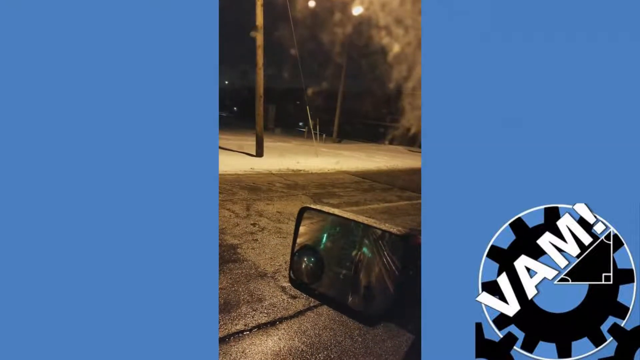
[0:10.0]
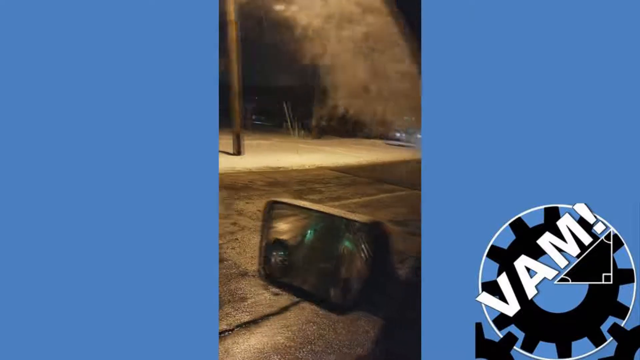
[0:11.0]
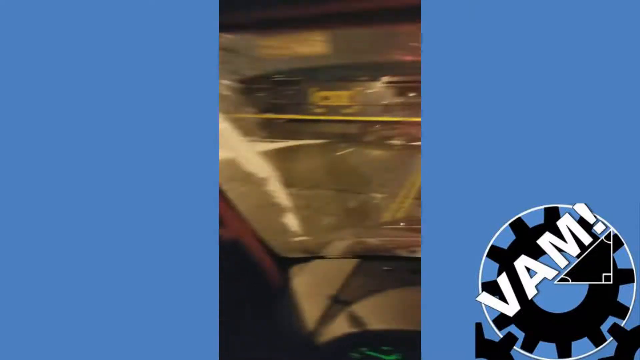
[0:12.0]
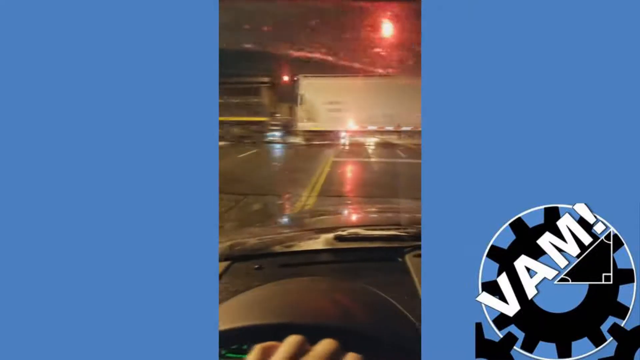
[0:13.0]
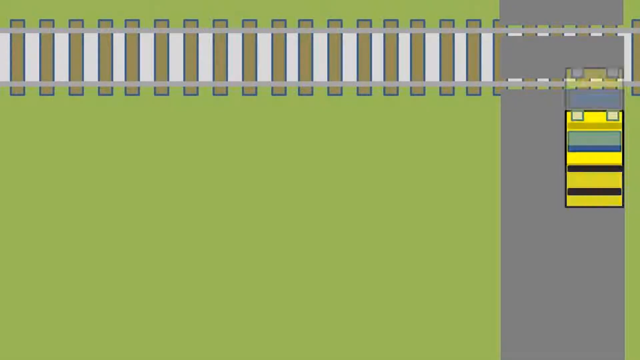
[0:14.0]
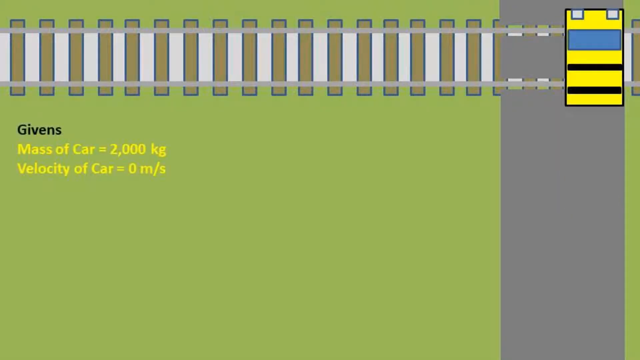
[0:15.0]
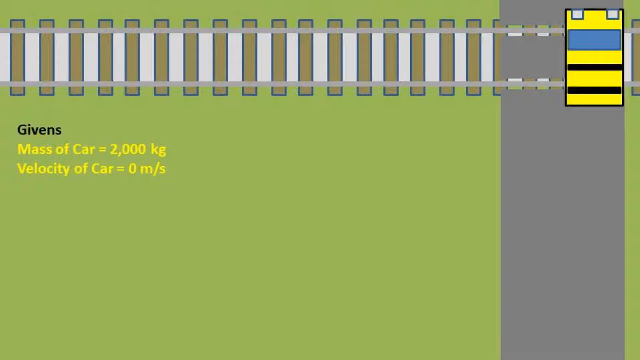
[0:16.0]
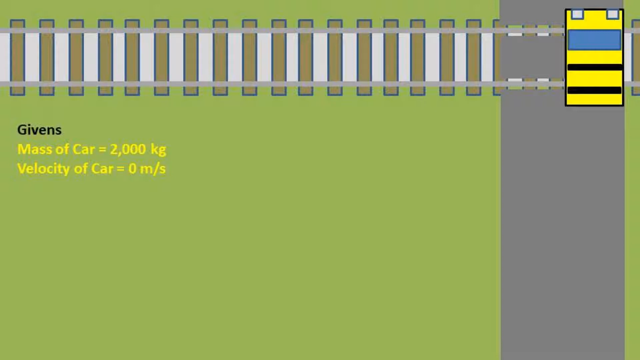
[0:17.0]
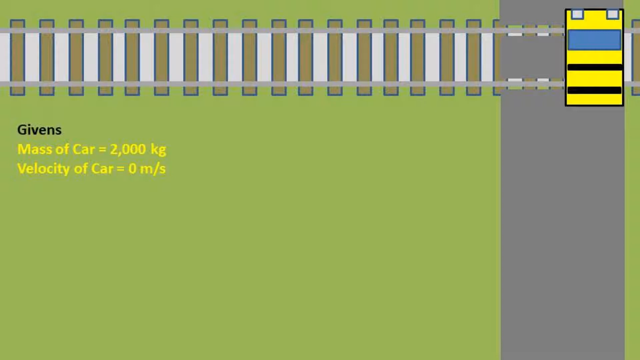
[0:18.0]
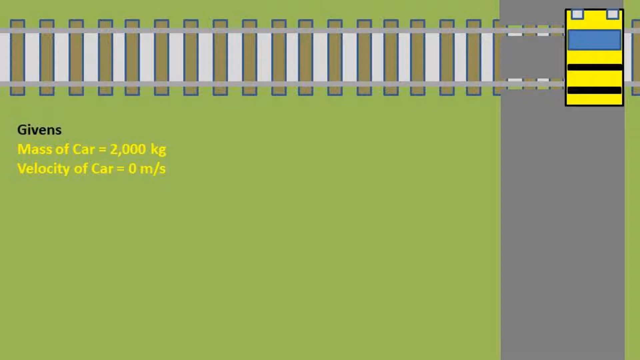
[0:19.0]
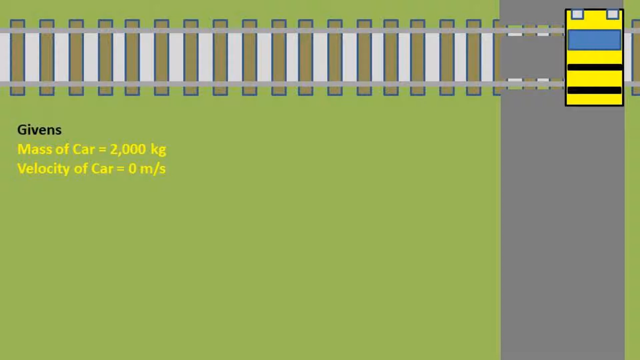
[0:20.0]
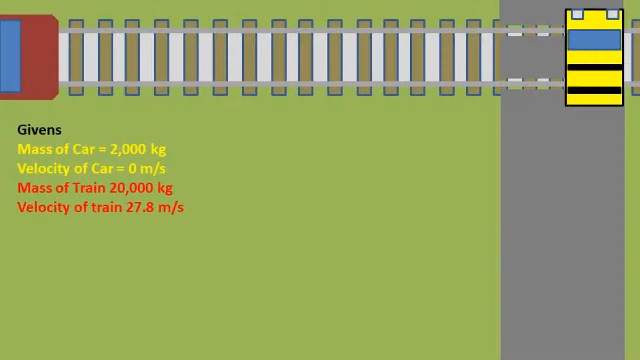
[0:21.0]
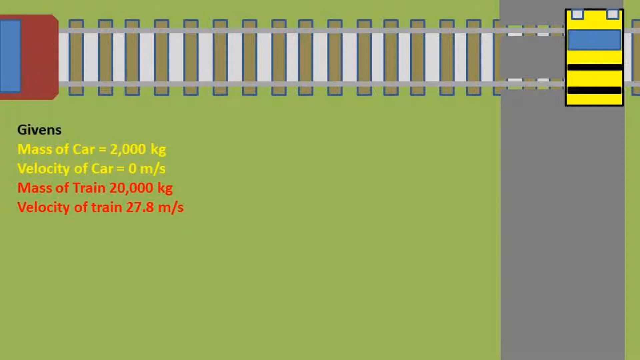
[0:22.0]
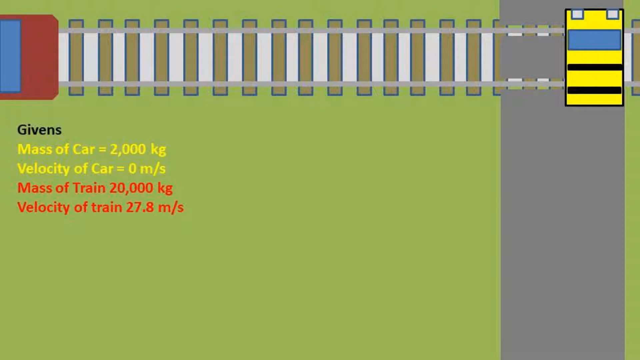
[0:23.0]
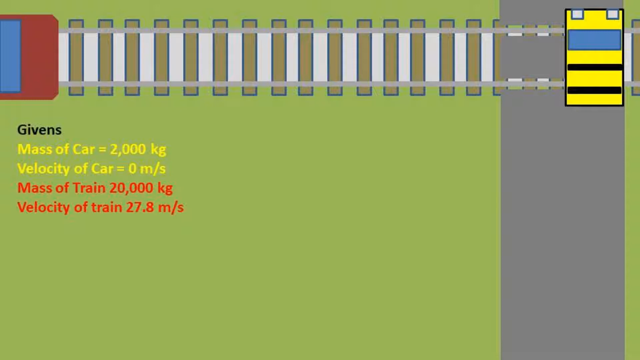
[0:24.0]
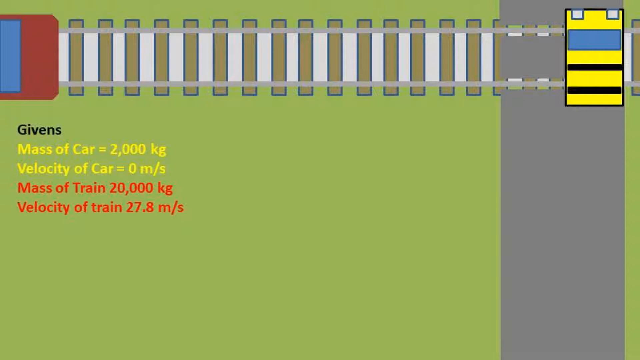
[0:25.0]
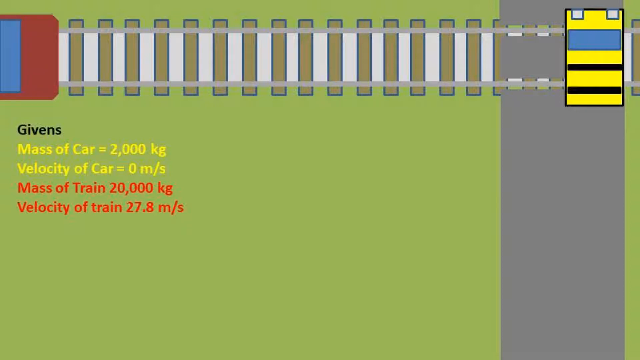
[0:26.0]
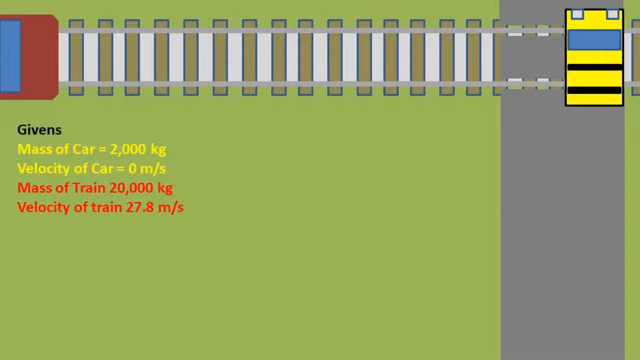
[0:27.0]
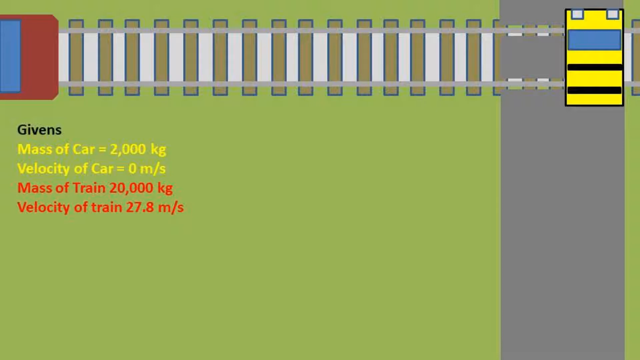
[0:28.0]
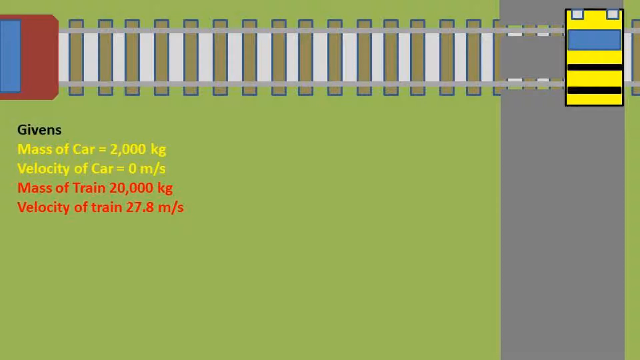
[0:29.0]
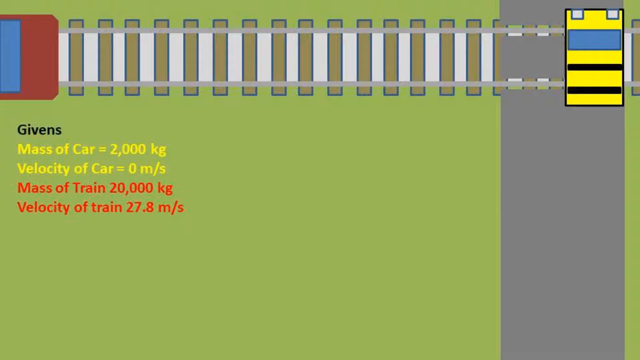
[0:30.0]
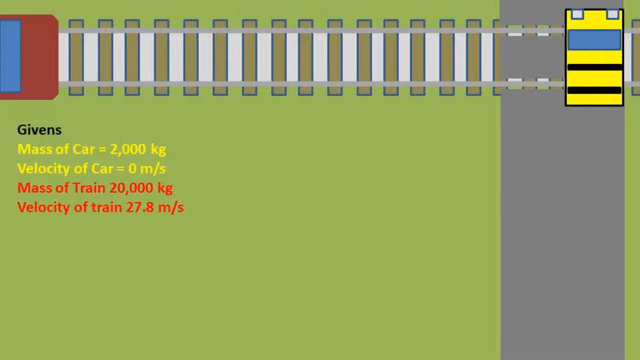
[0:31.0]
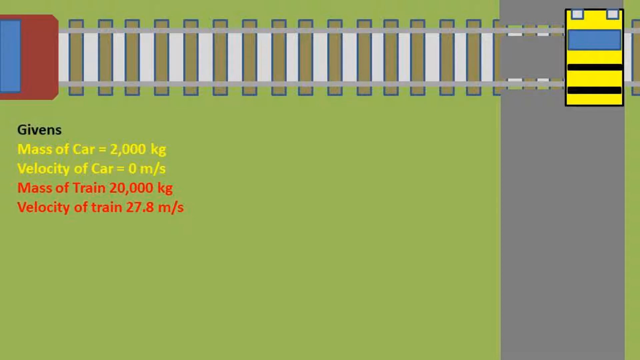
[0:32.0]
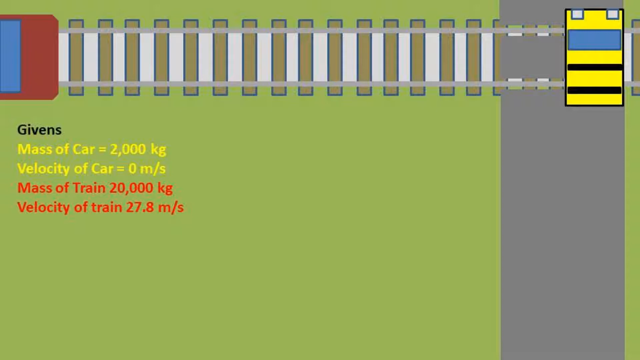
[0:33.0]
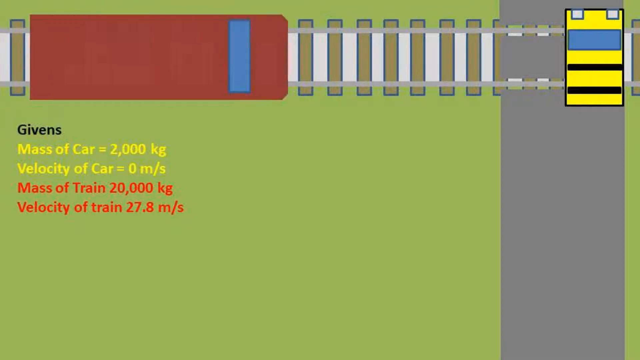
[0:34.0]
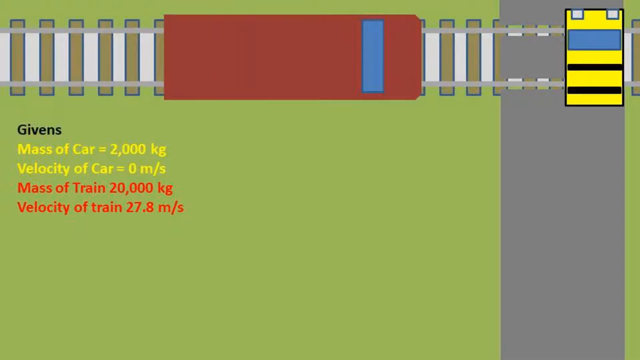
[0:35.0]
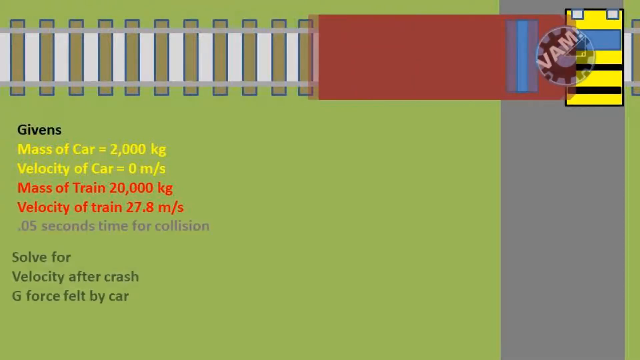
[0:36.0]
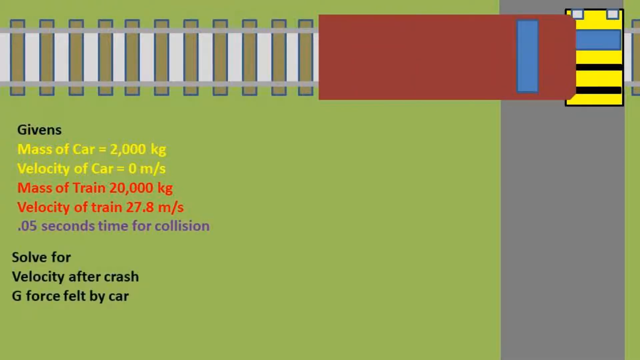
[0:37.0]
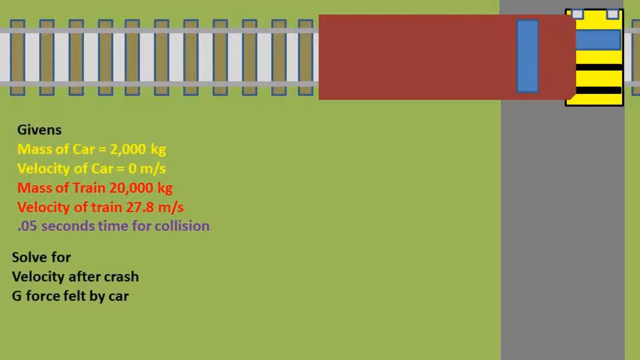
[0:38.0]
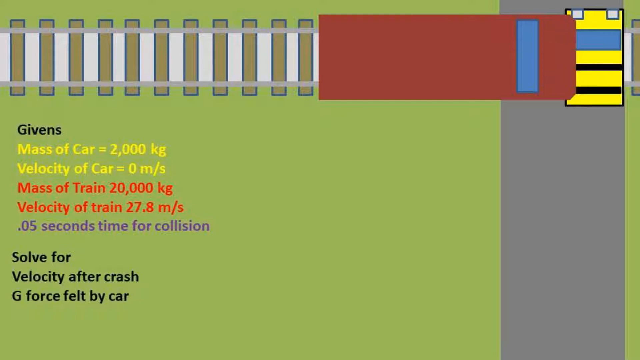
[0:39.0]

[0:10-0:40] A vertical video filmed from inside a vehicle shows a train at a rail crossing in front of the vehicle, first out the side of the driver's window and then through the front windscreen. Large blue bars surround the vertical video on either side, and to the right is a logo reading "VAM!". The view switches to a full-screen, simply animated diagram of a train track crossing a road, with a picture of a car stopped on the tracks. Givens are listed, including the mass and velocity of the car and the mass and velocity of the train. The train moves forward in the image until it hits the car, at which point "VAM" appears. The problem asks the viewer to solve for the velocity after the crash and the g-force felt by the car, stating a collision time of .05 seconds.